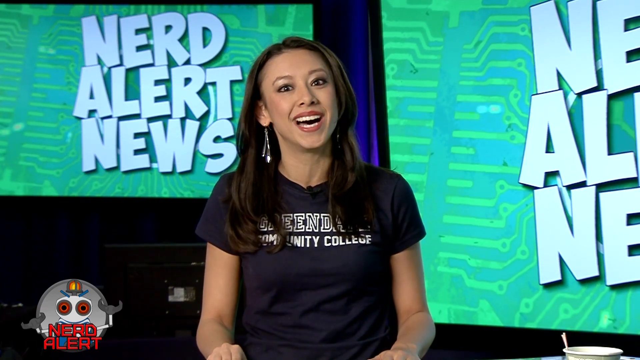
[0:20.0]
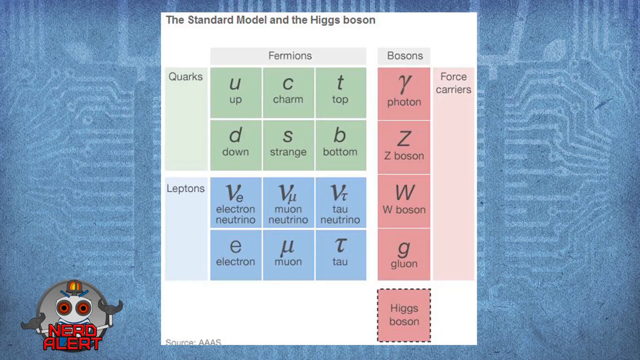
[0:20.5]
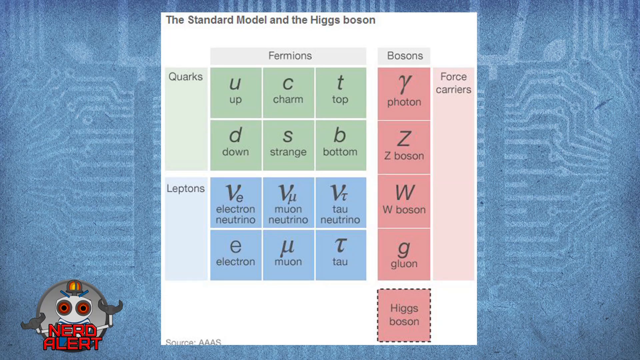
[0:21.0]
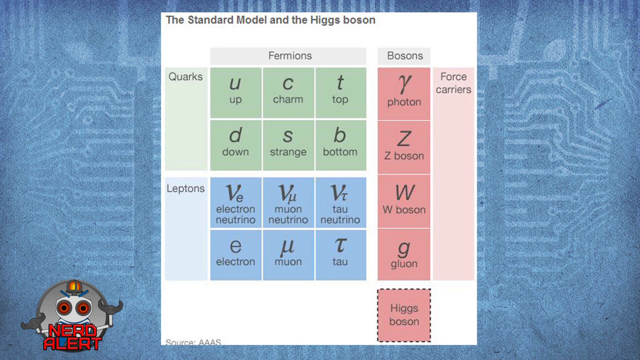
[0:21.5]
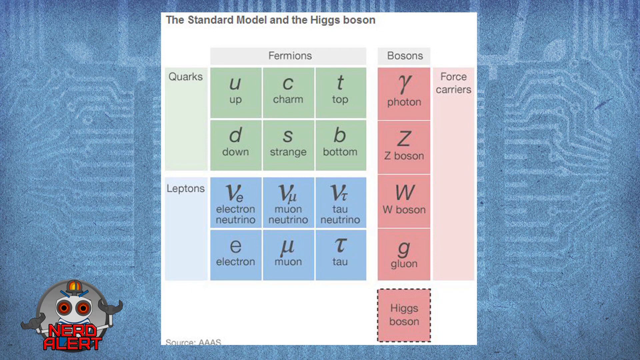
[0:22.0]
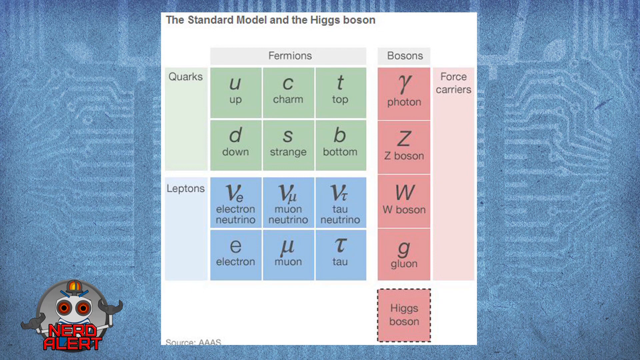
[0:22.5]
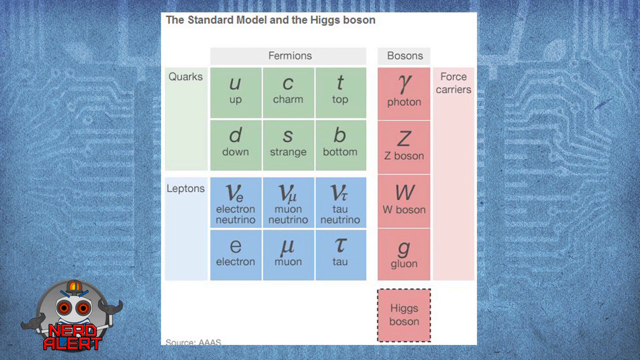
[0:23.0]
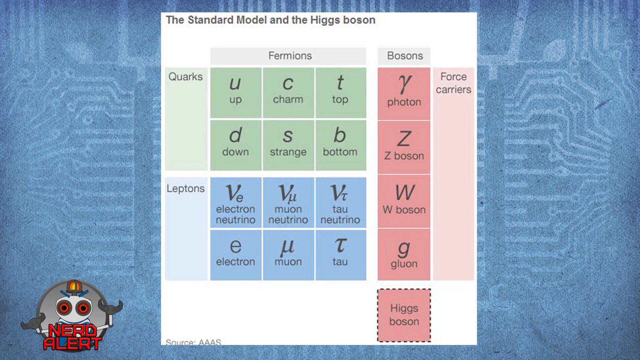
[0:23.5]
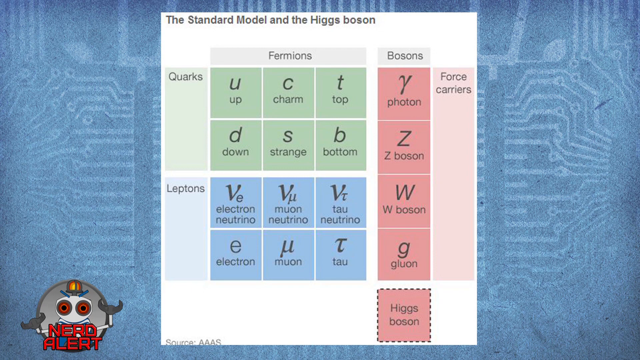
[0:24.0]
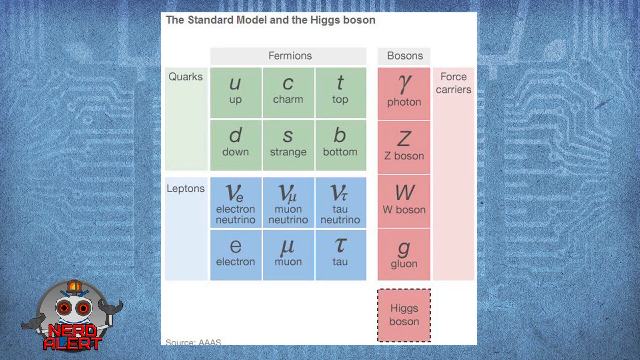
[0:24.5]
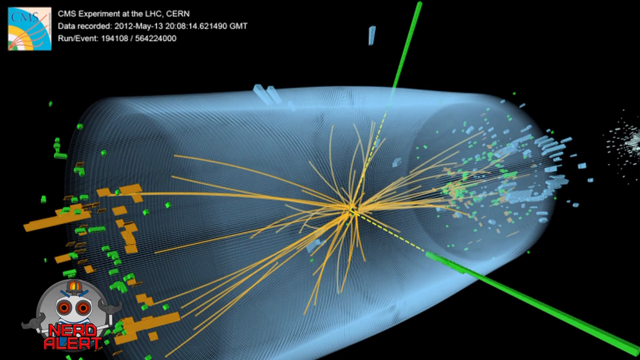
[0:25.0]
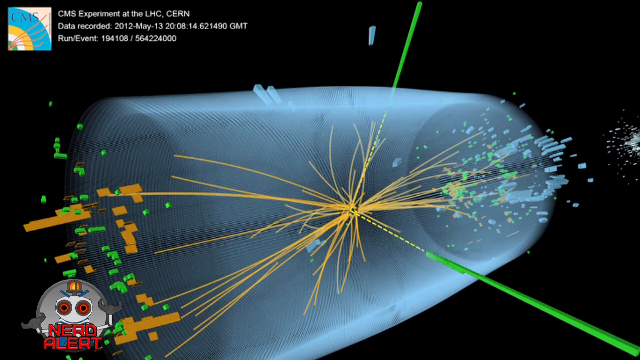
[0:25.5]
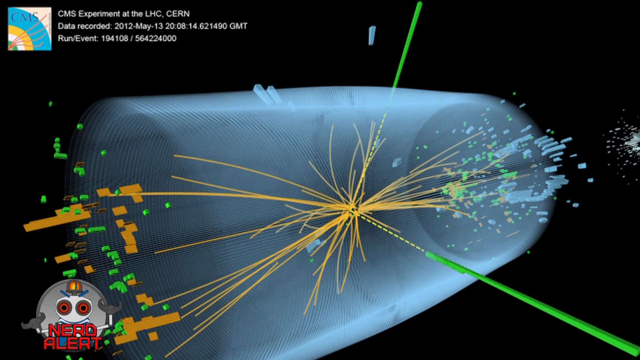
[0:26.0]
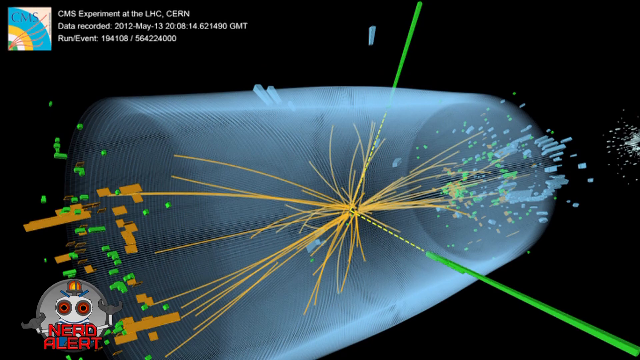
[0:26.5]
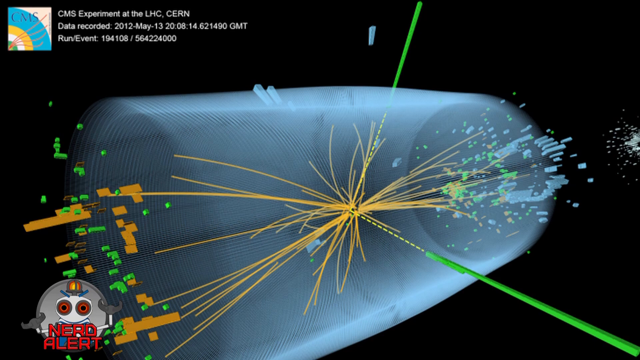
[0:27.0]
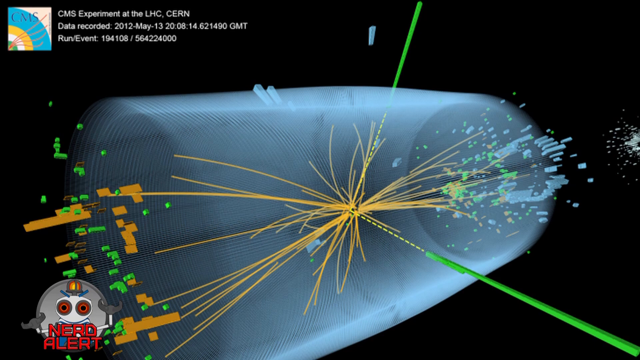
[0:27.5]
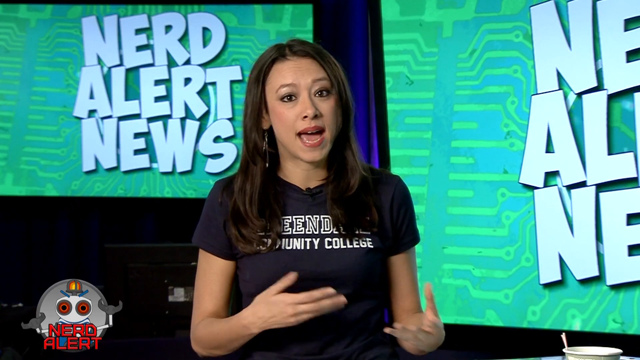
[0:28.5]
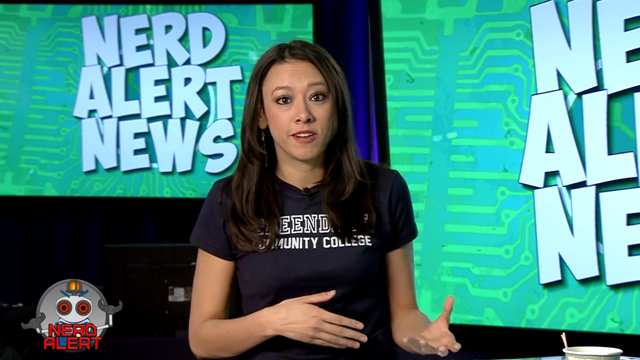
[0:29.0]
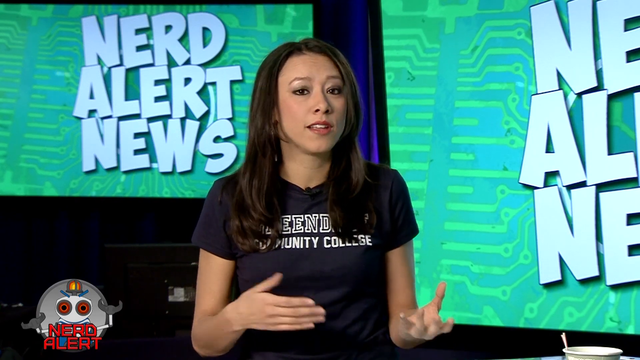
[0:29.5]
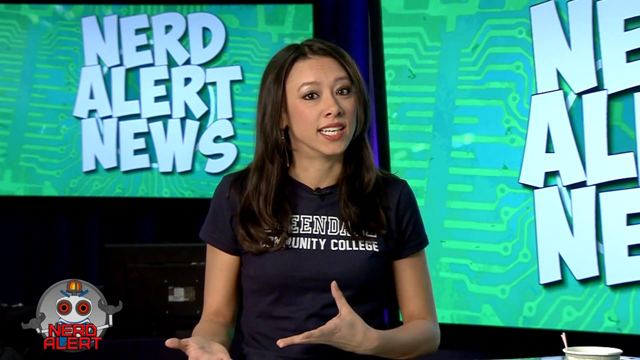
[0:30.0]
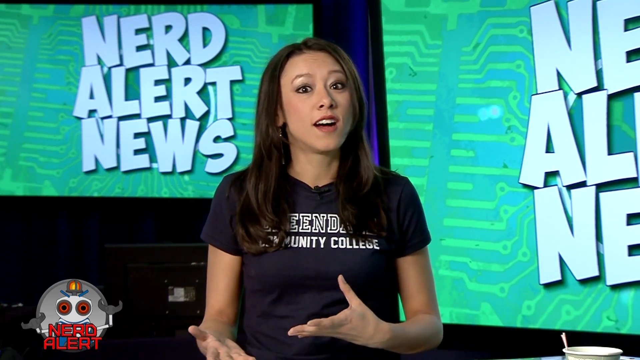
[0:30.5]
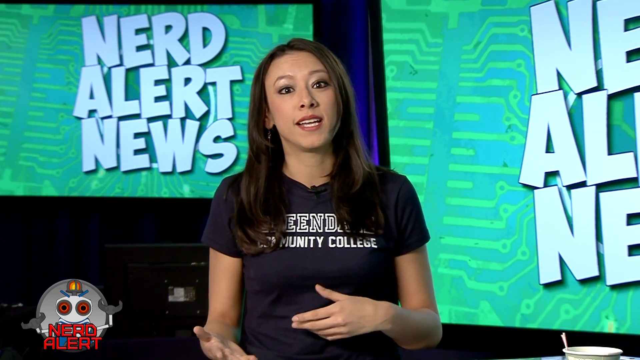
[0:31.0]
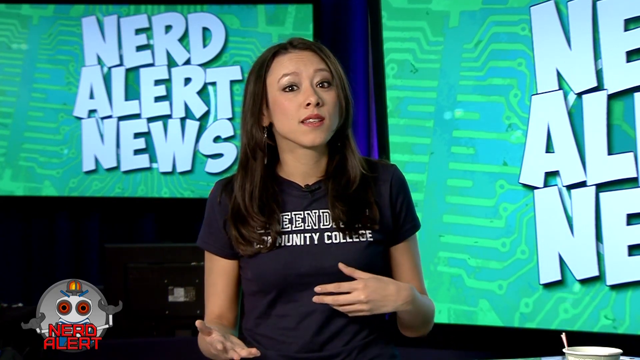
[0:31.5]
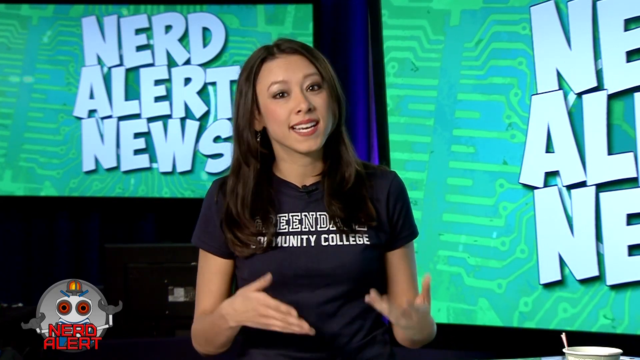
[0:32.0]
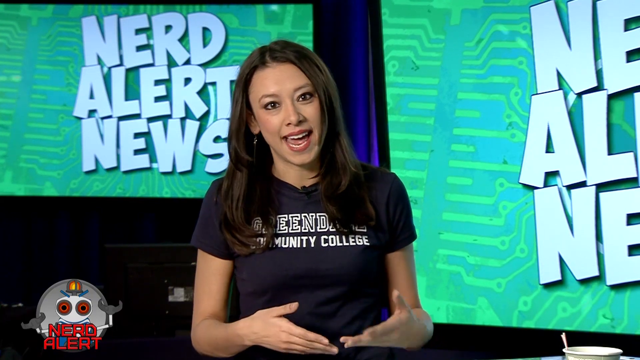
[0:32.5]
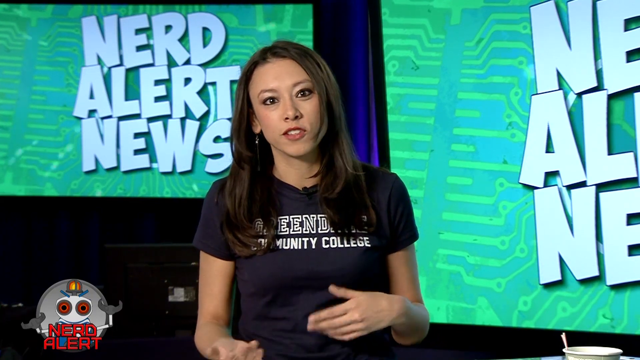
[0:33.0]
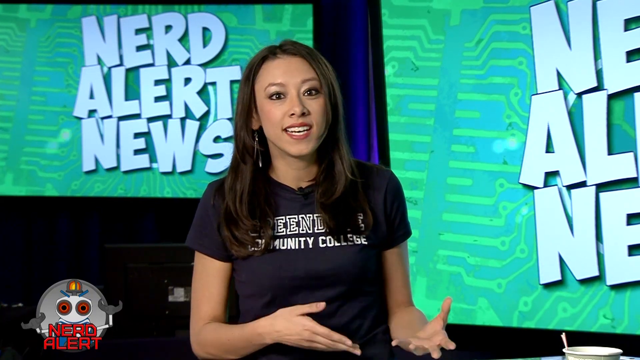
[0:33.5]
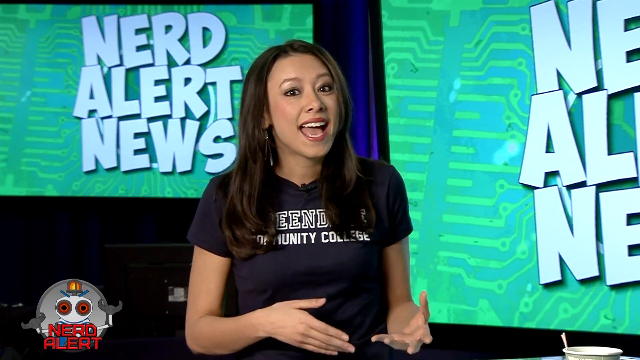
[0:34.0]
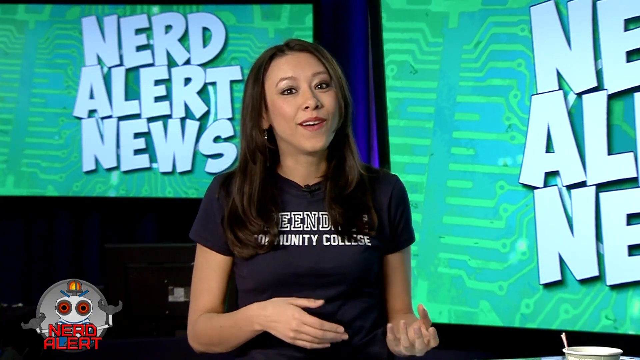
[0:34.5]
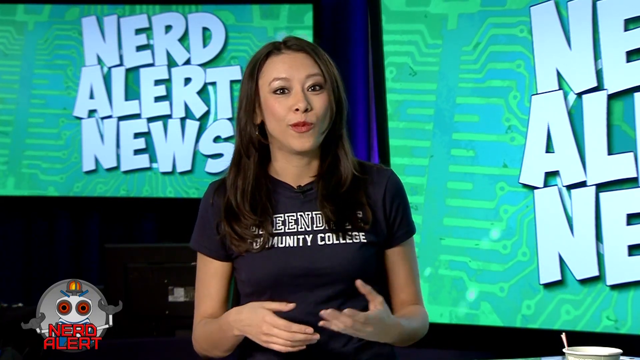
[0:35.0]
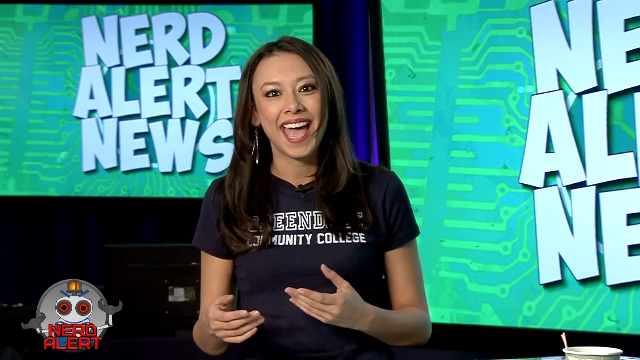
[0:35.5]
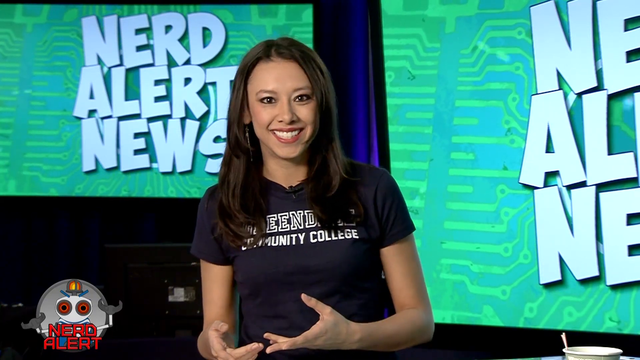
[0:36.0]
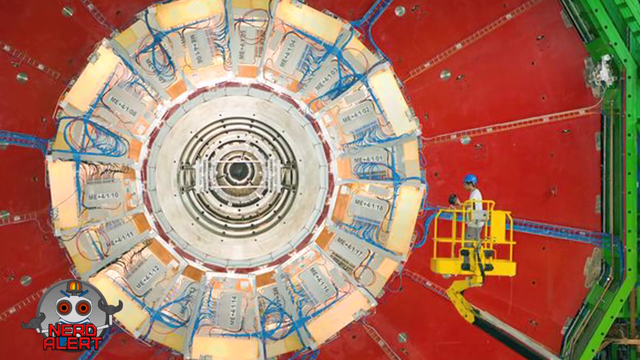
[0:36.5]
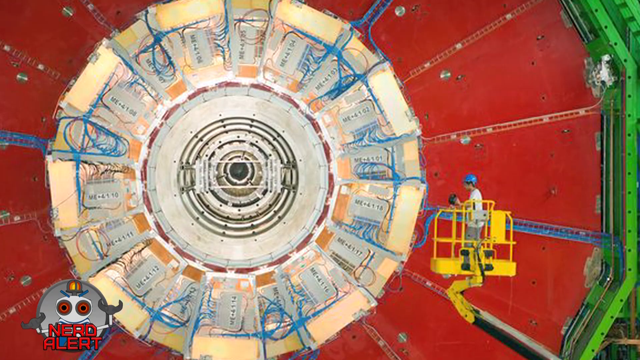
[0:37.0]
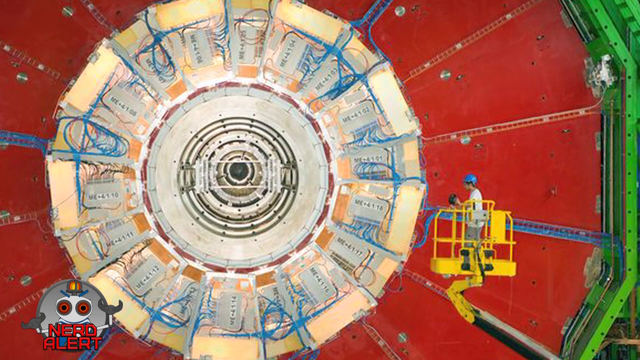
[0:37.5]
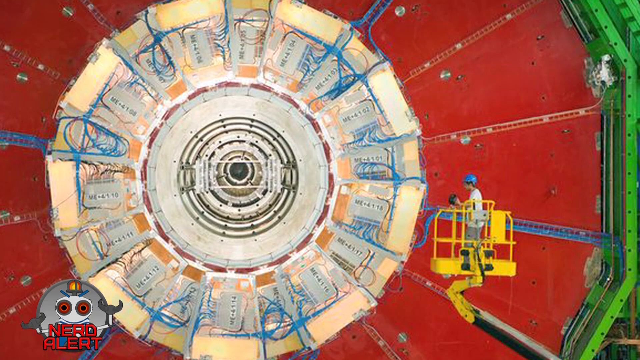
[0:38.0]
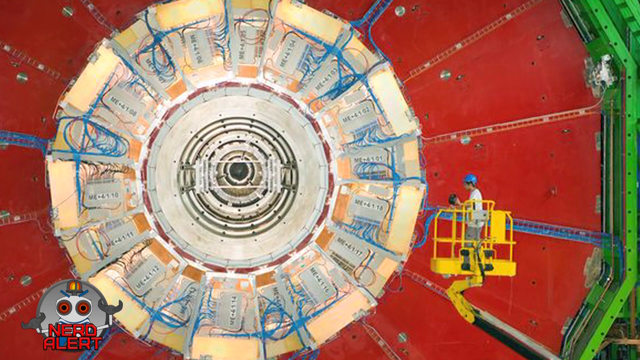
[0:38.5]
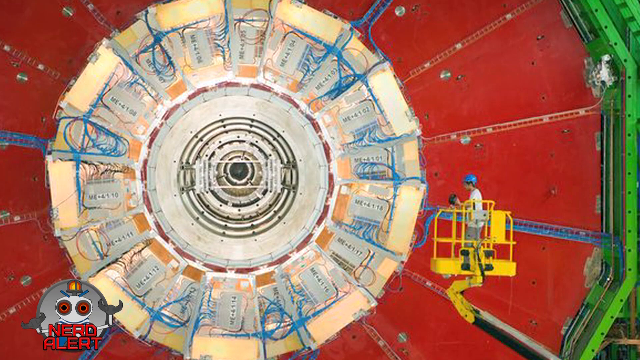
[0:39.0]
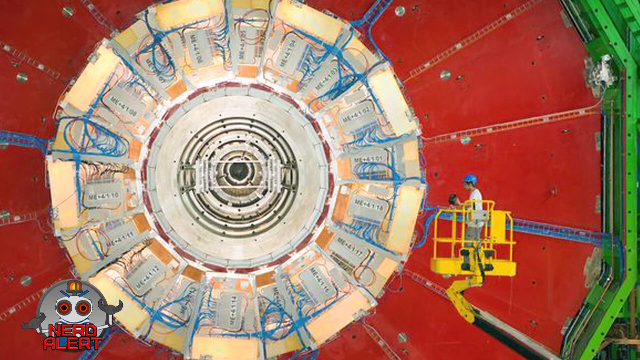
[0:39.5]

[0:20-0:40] A chart of the standard model and the Higgs boson is shown. The quarks are listed as up, charm, top, down, strange and bottom. The leptons are the electron neutrino, muon neutrino, tau neutrino, electron, muon and tau. The bosons, or force carriers, include the photon, Z boson, W boson and gluon. The chart is grouped into quarks, leptons and bosons, with fermions also labeled. The CMS experiment is also shown.